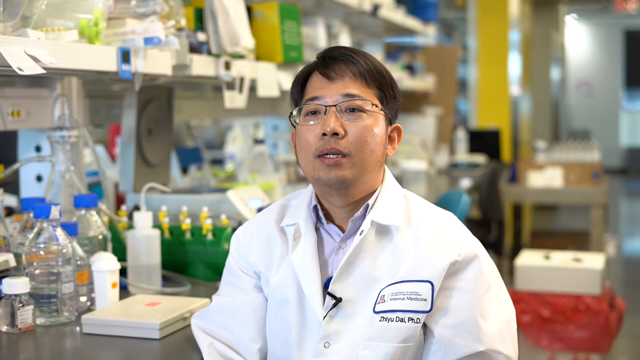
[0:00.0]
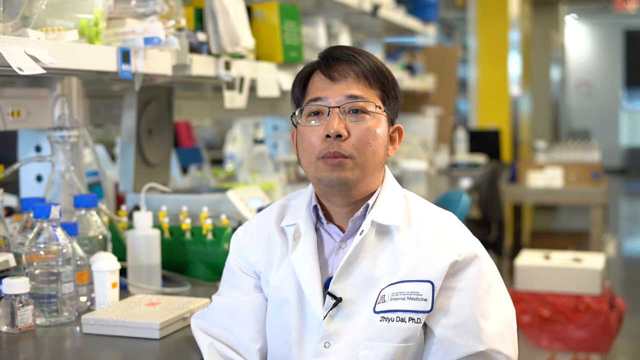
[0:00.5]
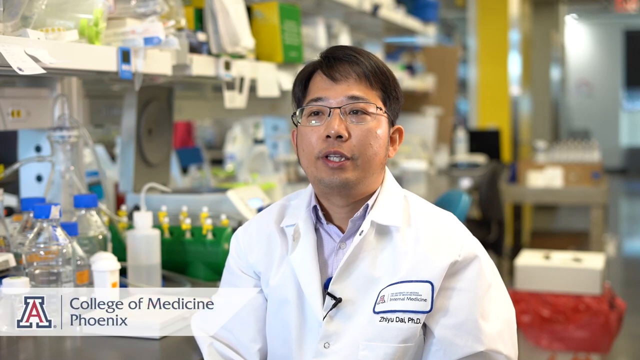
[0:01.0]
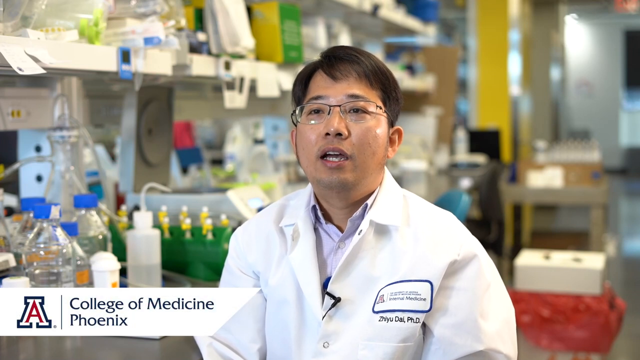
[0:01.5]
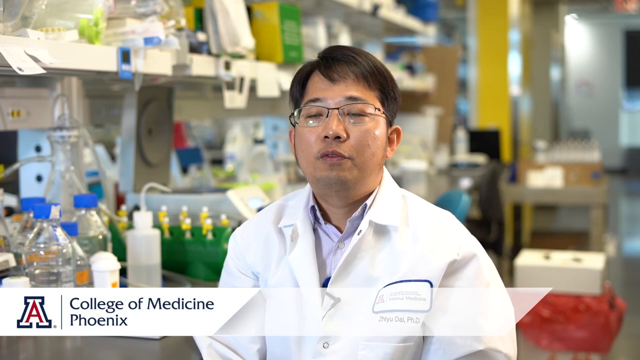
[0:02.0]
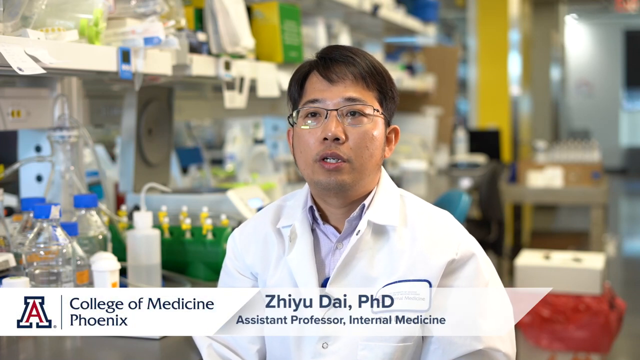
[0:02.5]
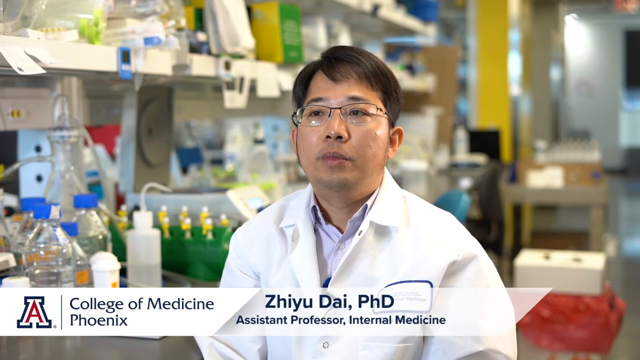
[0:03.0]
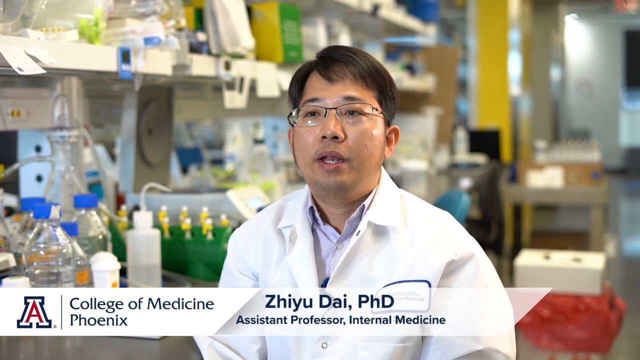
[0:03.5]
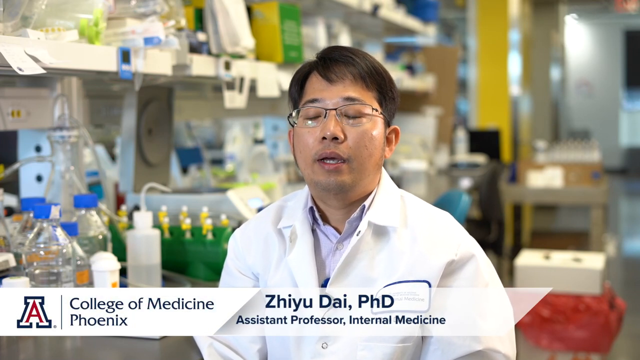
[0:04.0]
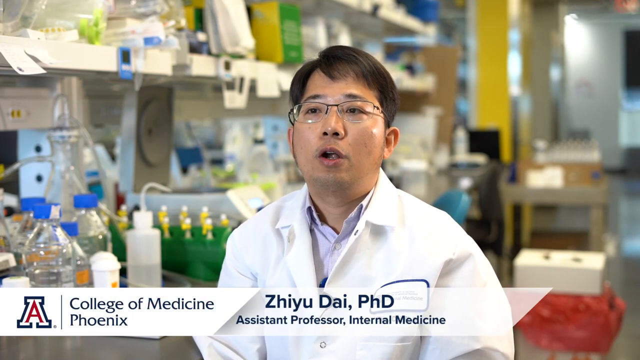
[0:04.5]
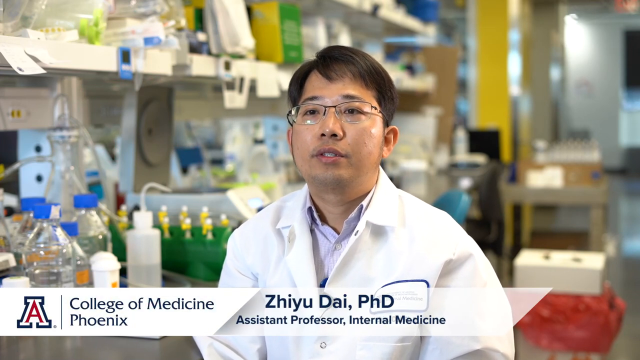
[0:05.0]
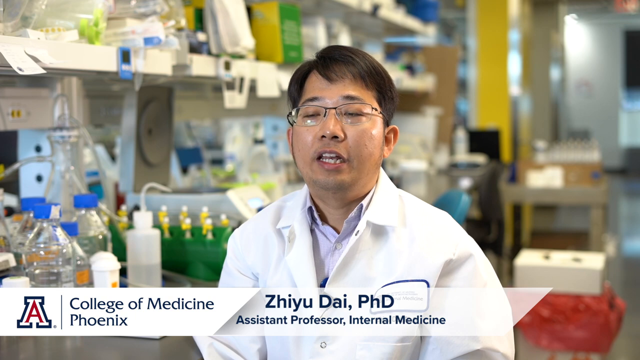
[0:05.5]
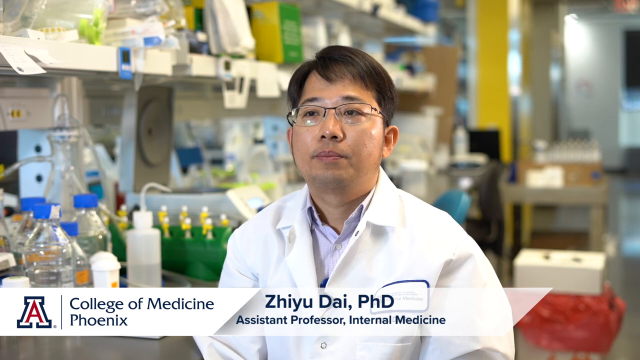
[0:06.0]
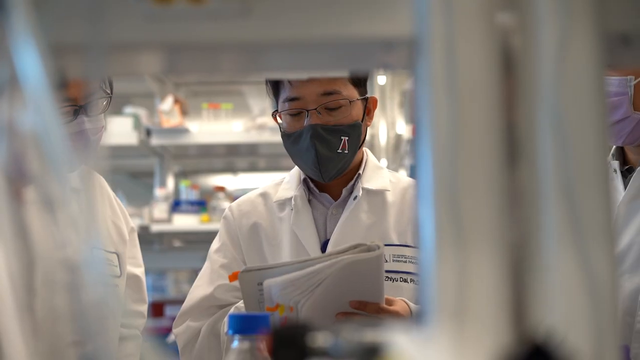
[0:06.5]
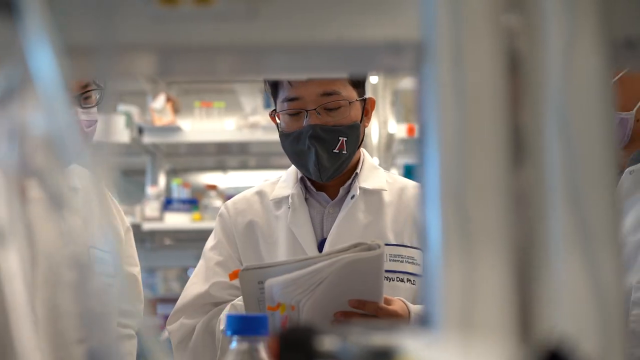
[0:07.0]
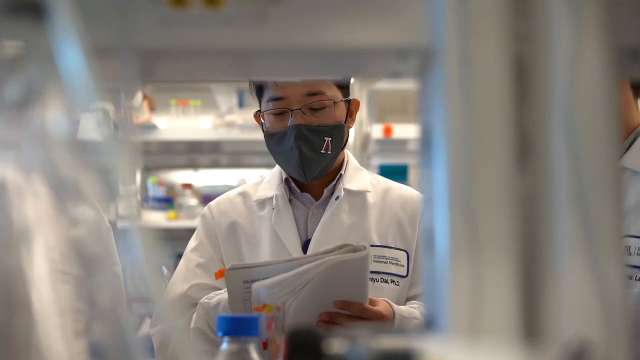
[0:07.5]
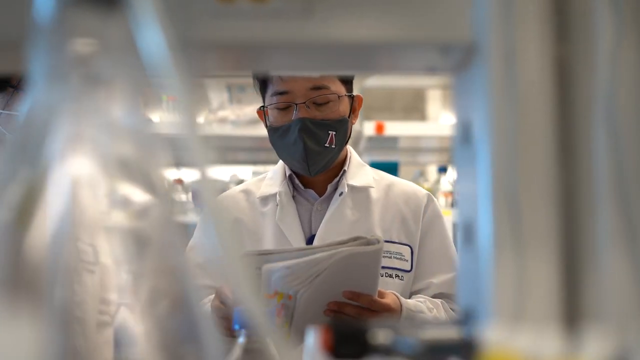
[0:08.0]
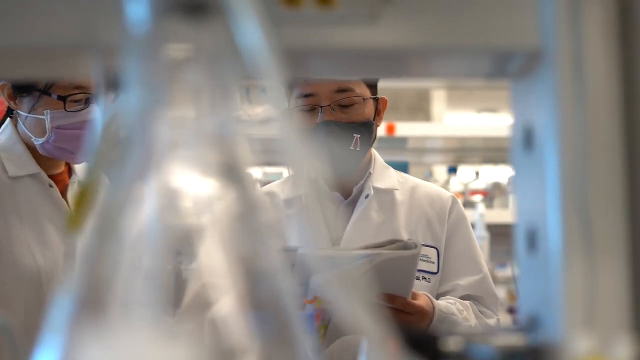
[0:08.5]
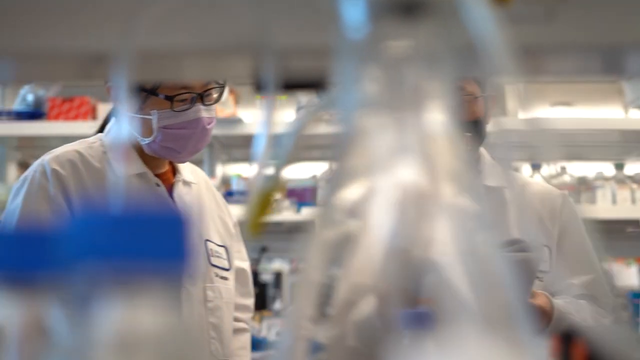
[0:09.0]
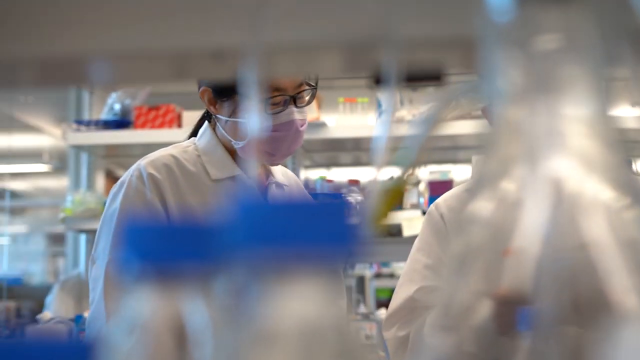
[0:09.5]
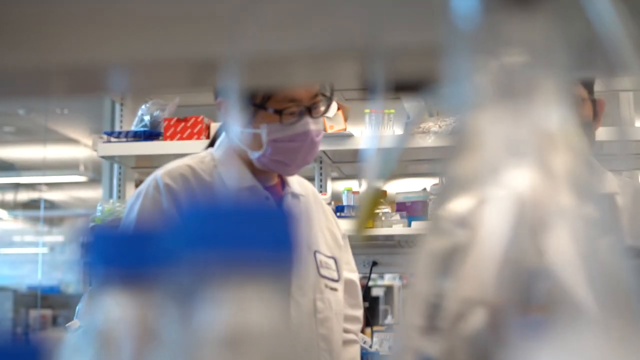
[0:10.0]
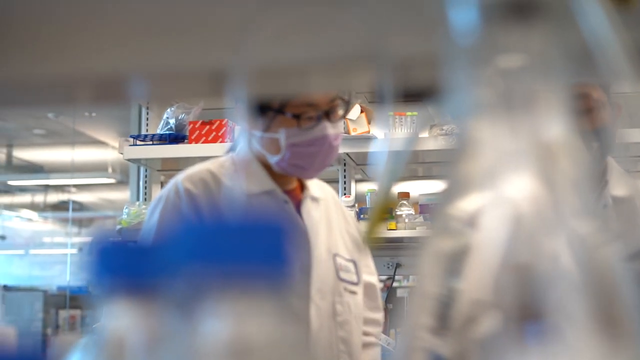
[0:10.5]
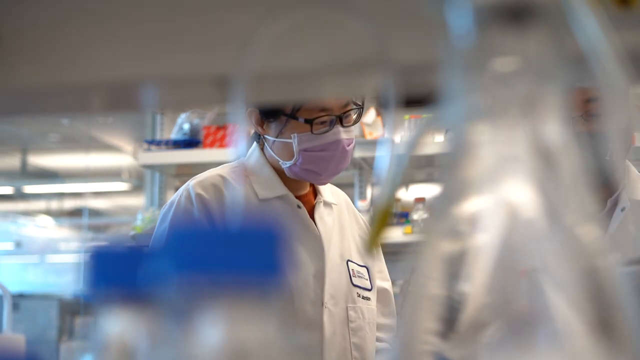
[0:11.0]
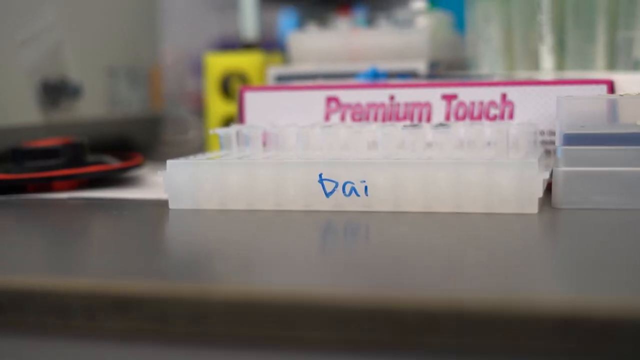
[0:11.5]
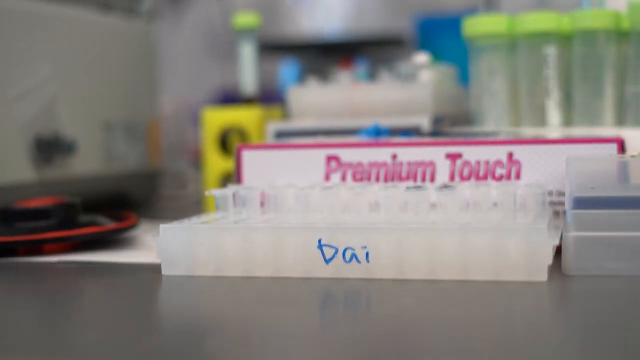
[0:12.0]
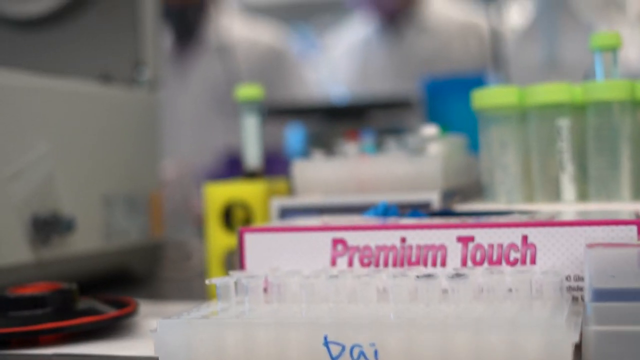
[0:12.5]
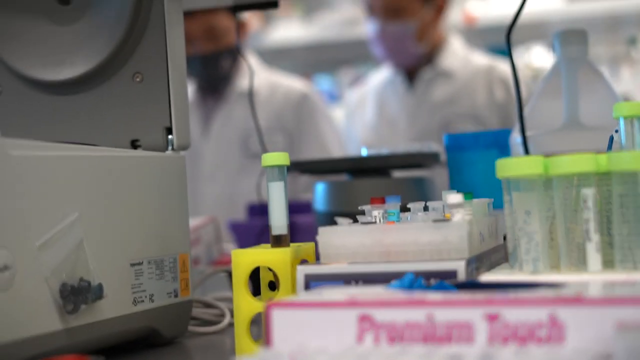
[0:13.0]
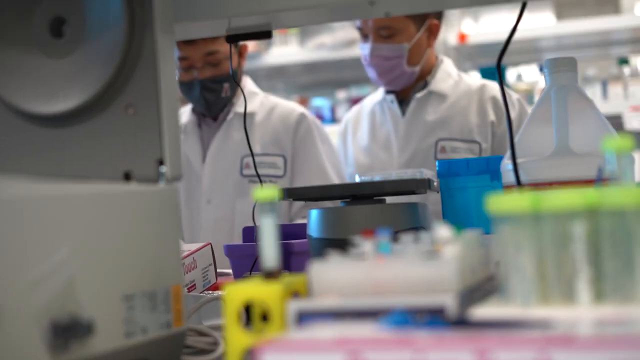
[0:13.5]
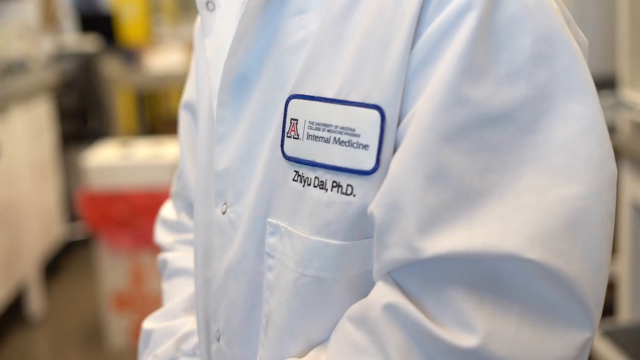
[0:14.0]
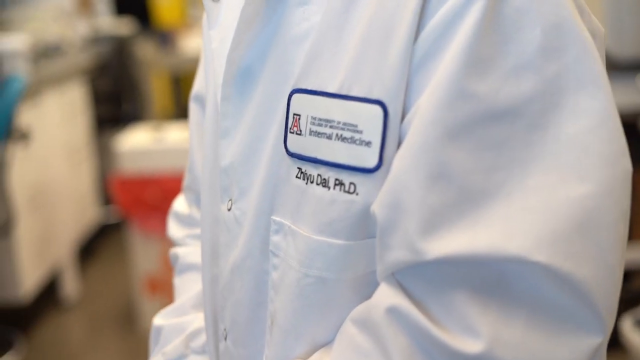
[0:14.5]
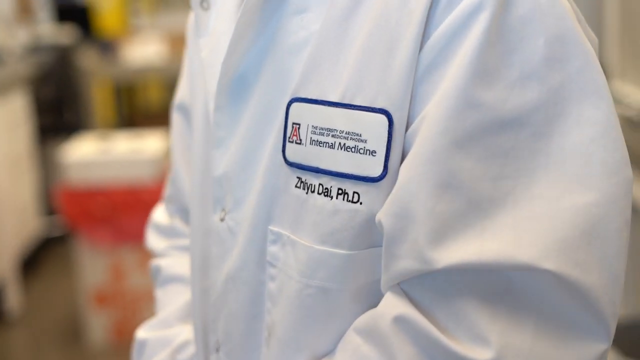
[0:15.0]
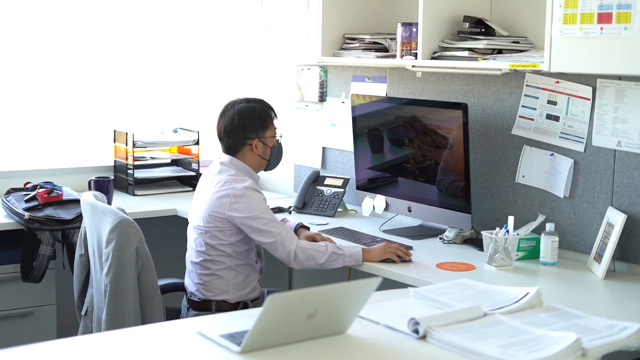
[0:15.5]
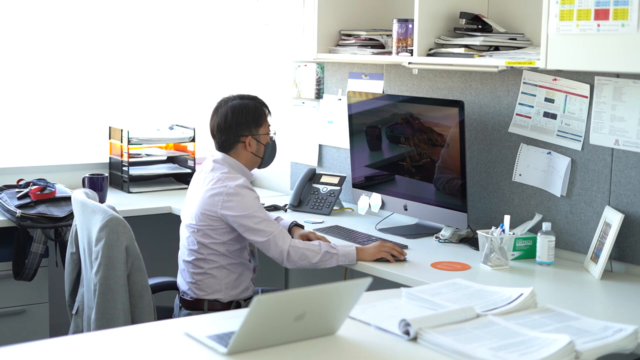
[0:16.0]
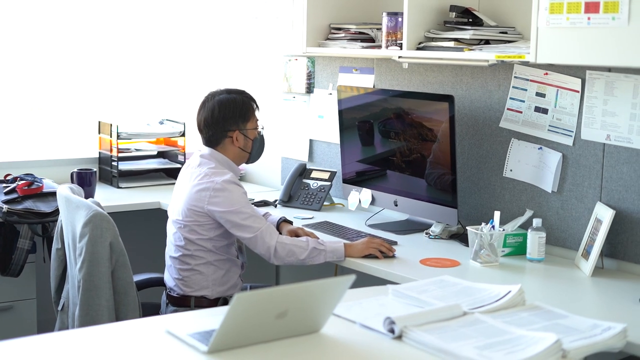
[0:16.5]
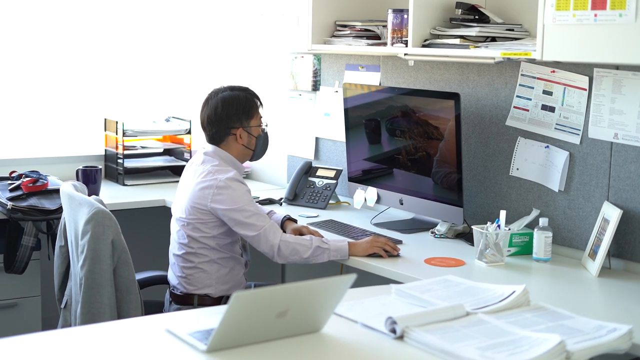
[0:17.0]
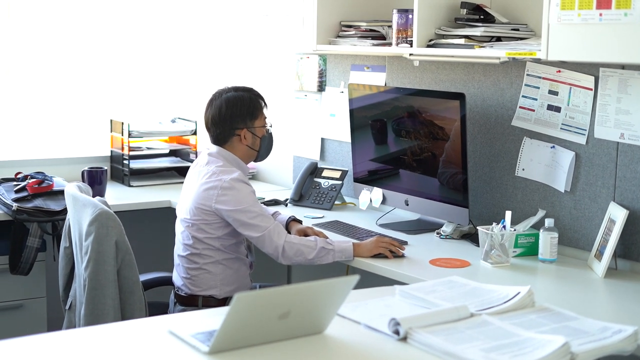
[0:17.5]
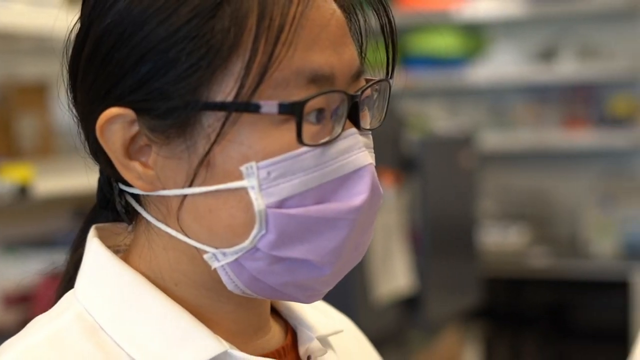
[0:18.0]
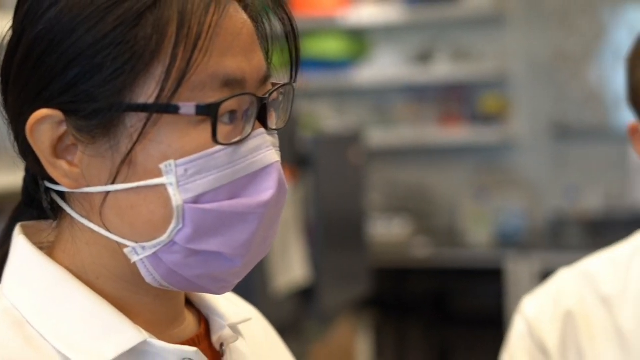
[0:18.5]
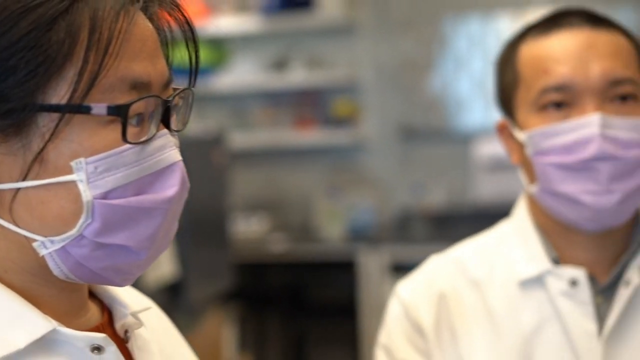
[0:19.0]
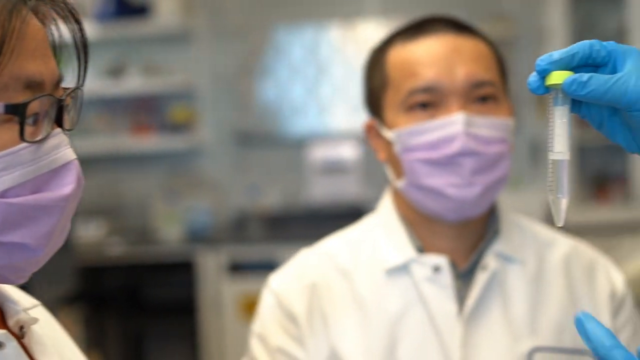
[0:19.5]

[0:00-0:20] An Asian man wears glasses with thin black frames and has short brown hair swept to his left side in a side part. He wears a white lab coat over a collared button-up shirt, with a microphone on his coat. To his right are bottles of various colors, including clear bottles with blue lids and another bottle with a curved tip, and behind those are green containers. Three white shelves are visible. To his left and behind him is a brown cart holding boxes and other items. He is speaking, and the screen reads "College of Medicine, Phoenix". The image then shows him behind shelving with another individual, the two discussing information on a clipboard. Next comes a test tube setup, with "Premium Touch" written in the background. The camera pans up to the two doctors, then shows a doctor working at a computer with his back to the camera, and then another researcher, an Asian woman with long brown hair, black glasses with thicker frames and a purple mask. The view pans over to the main individual, who is also wearing a purple mask. His name is ZHIYU DAI.